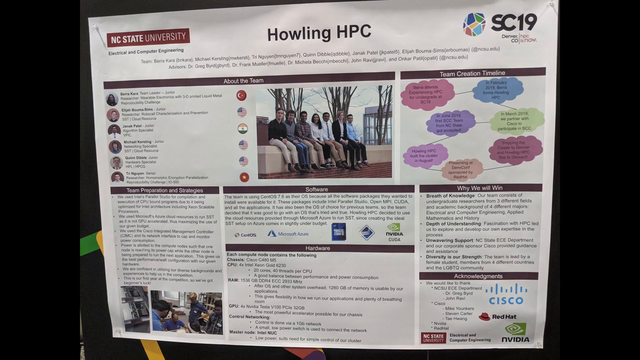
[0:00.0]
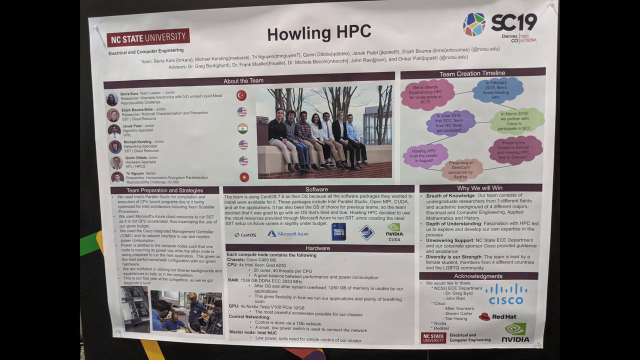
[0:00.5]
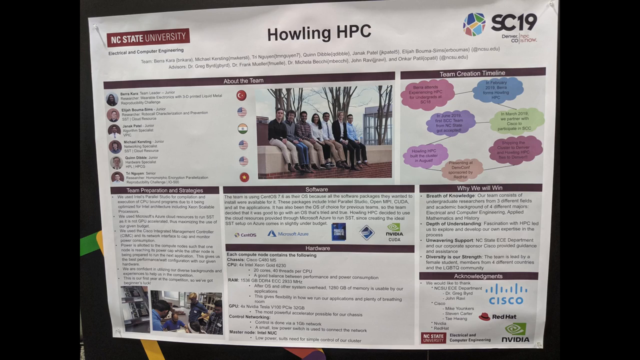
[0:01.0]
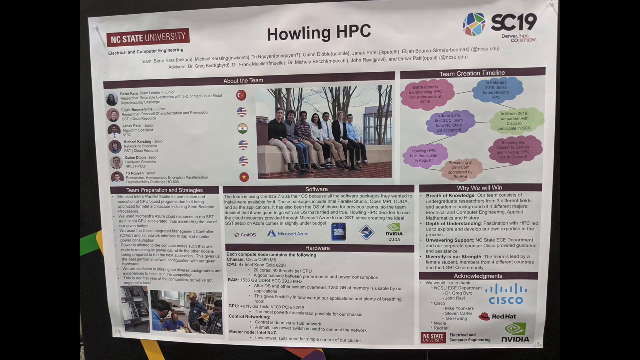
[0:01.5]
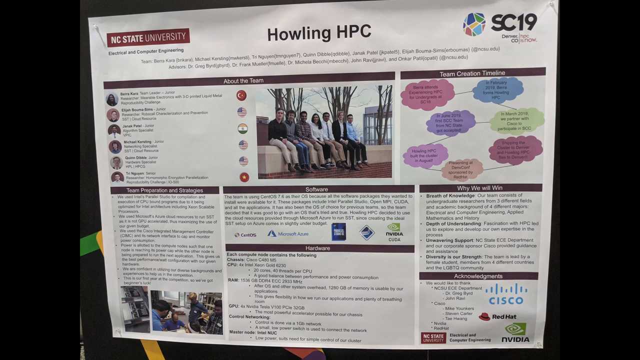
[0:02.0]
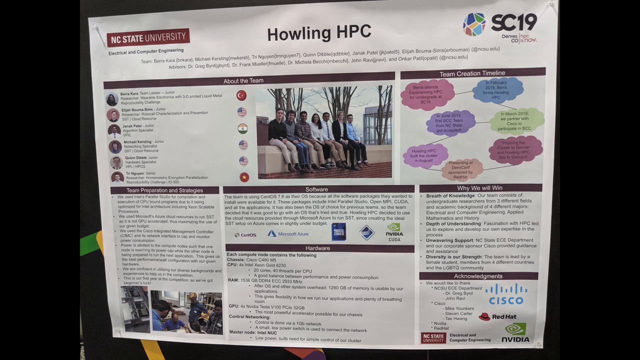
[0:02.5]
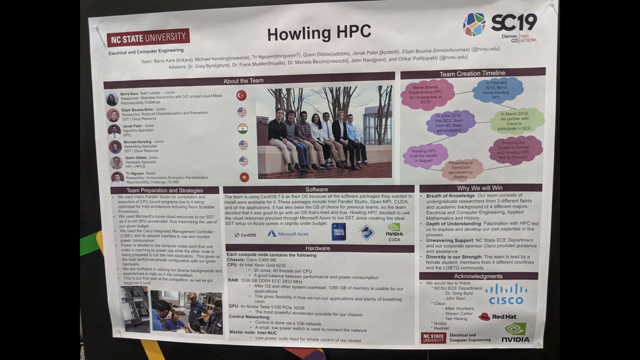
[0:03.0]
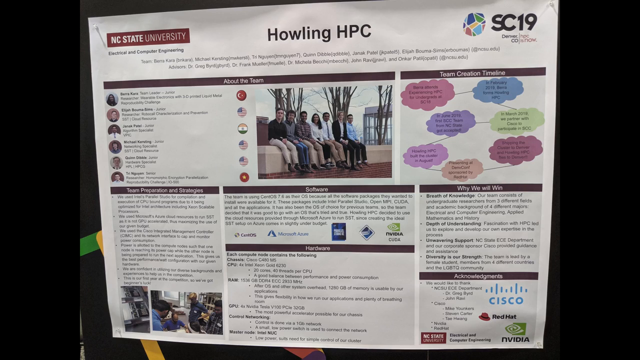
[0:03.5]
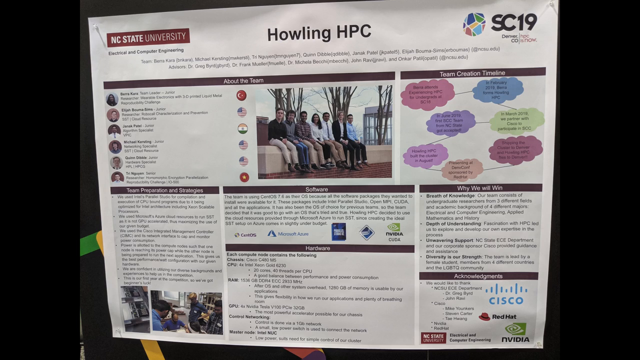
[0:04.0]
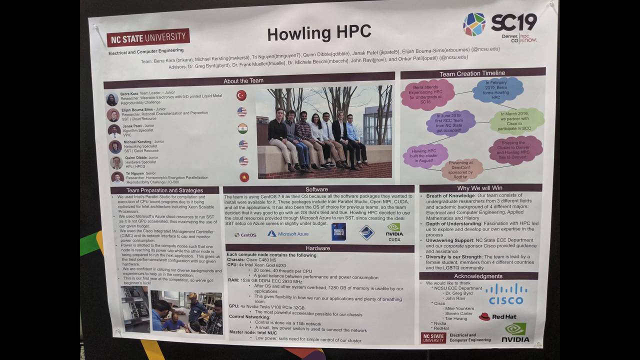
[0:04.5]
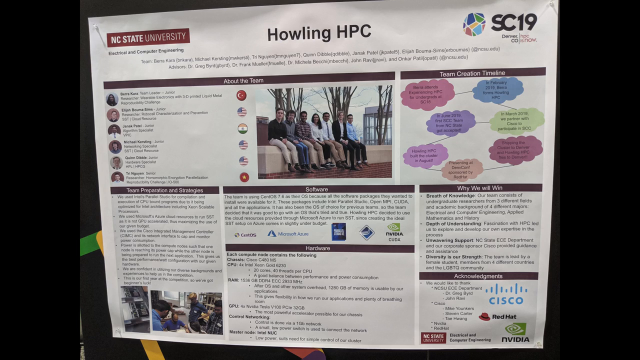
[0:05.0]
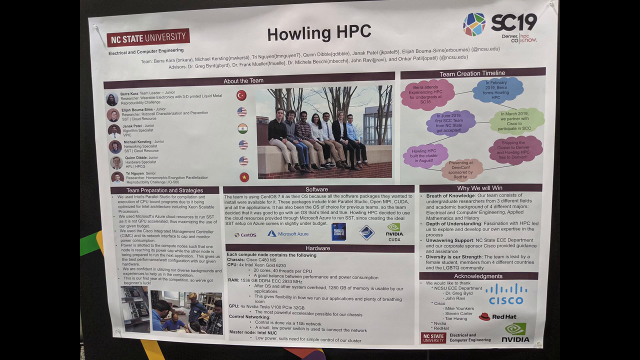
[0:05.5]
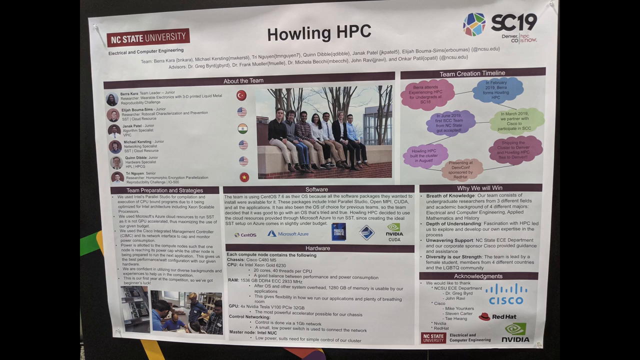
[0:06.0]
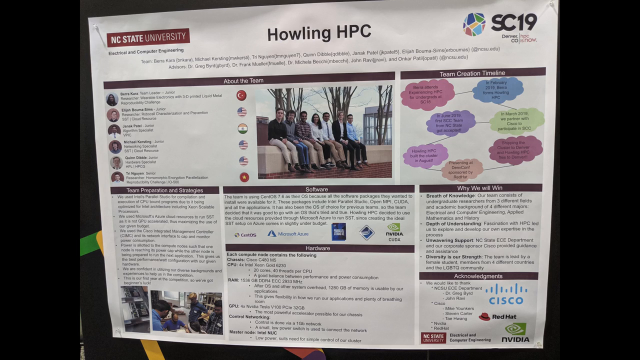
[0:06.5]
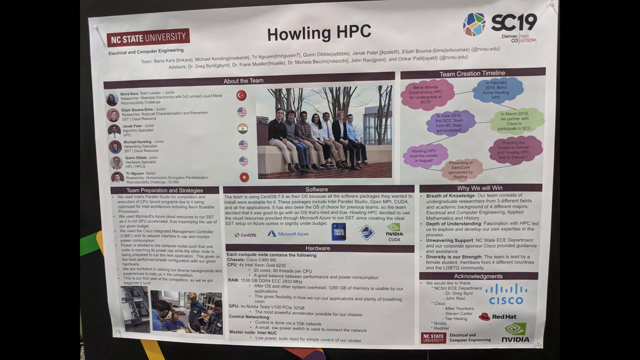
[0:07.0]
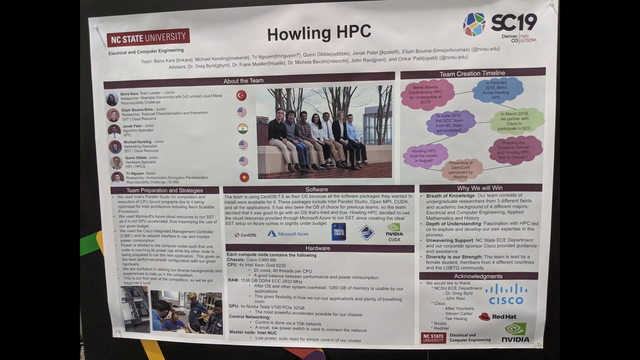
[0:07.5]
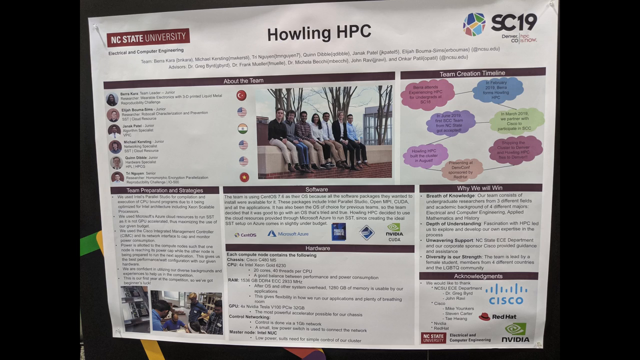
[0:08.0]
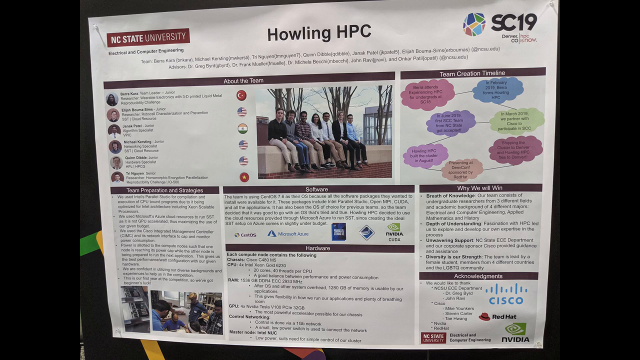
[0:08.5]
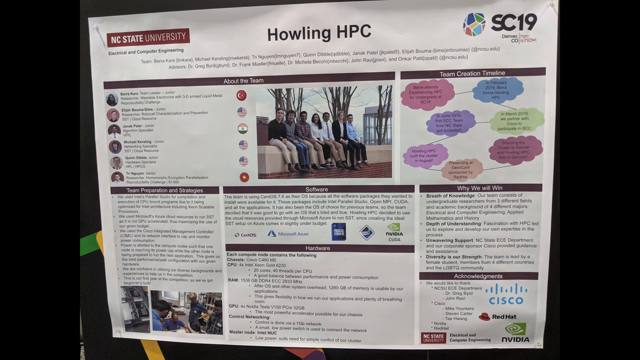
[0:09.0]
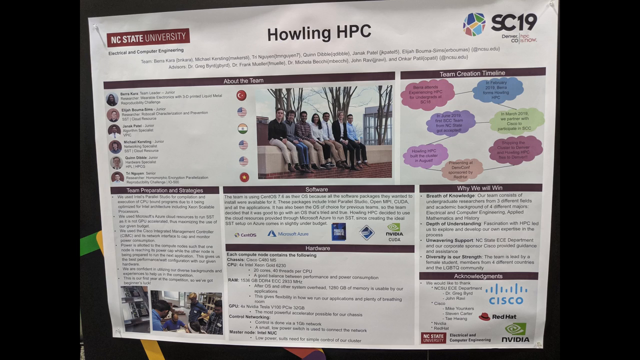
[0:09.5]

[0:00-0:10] A news-article-style page appears, with "Howling HPC" at the top center; it is from North Carolina State University. The page stays the focal point, showing several groups of pictures and blocks of article text. The center picture appears to show a group of staff or students outside, sitting on a brick wall area. It appears to be the fall or winter months, as the trees in the background have no leaves.